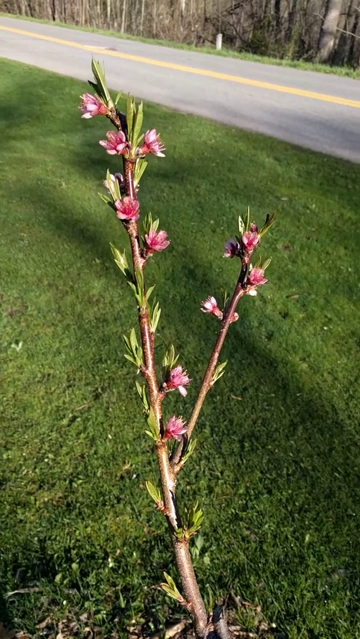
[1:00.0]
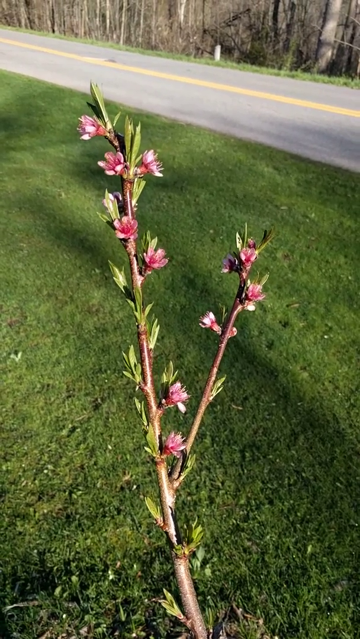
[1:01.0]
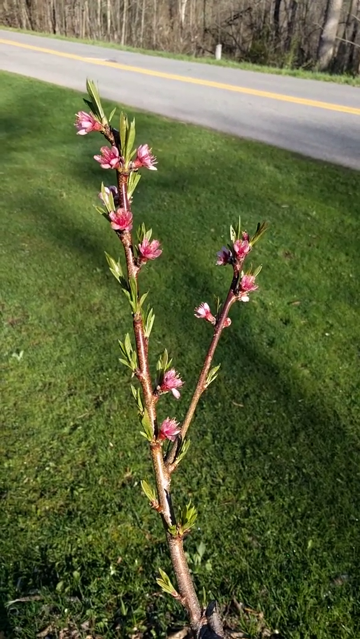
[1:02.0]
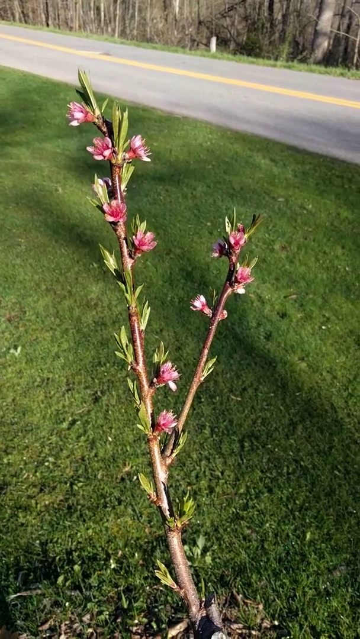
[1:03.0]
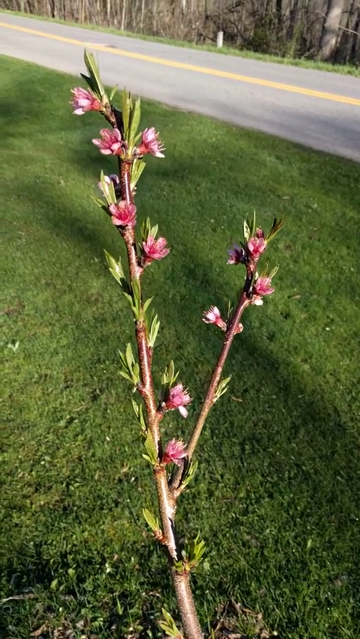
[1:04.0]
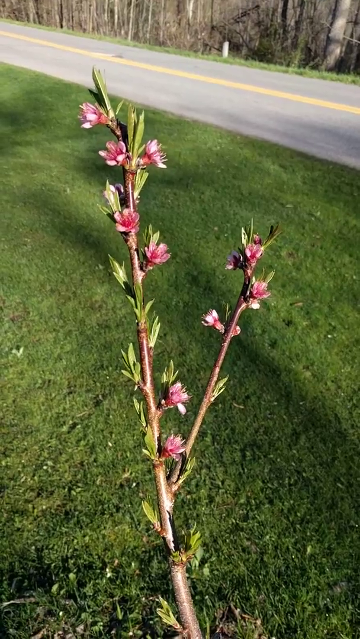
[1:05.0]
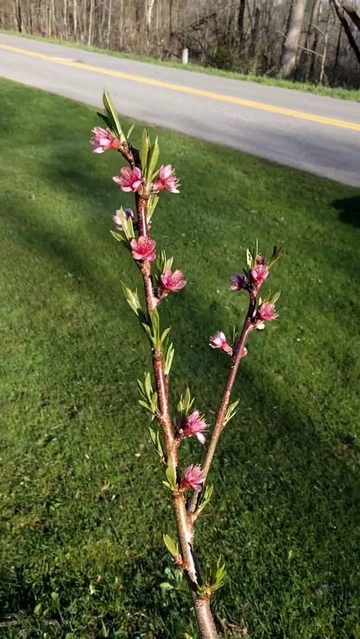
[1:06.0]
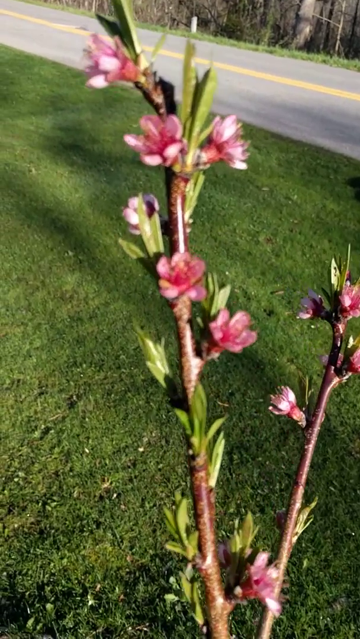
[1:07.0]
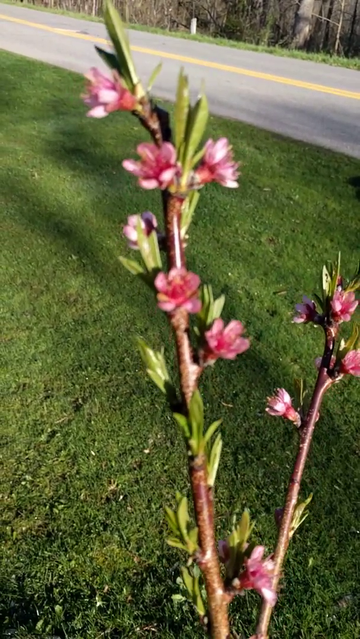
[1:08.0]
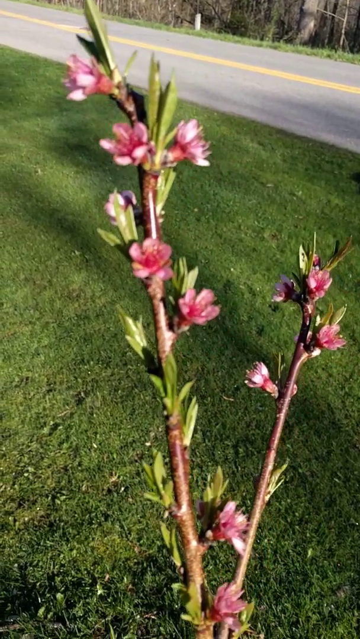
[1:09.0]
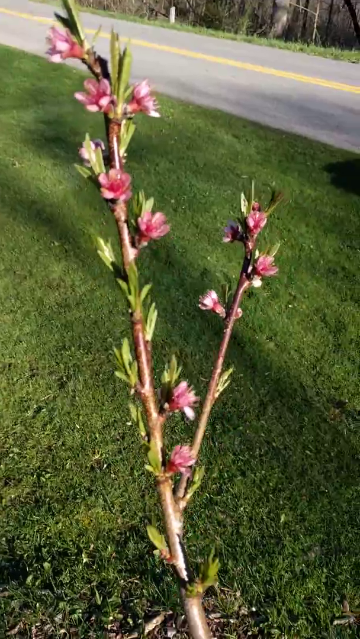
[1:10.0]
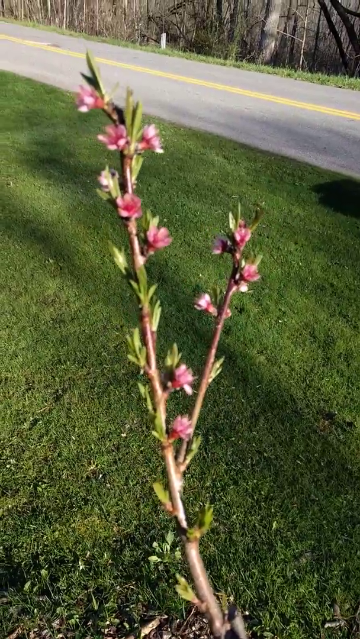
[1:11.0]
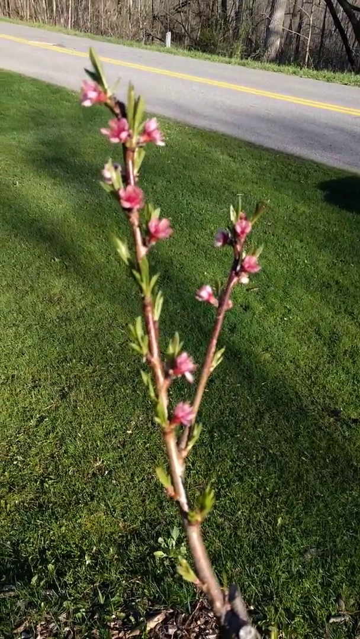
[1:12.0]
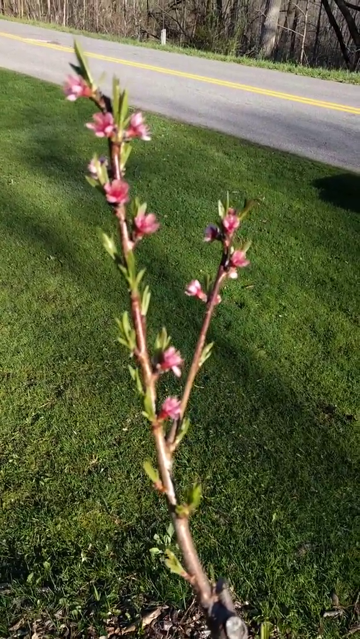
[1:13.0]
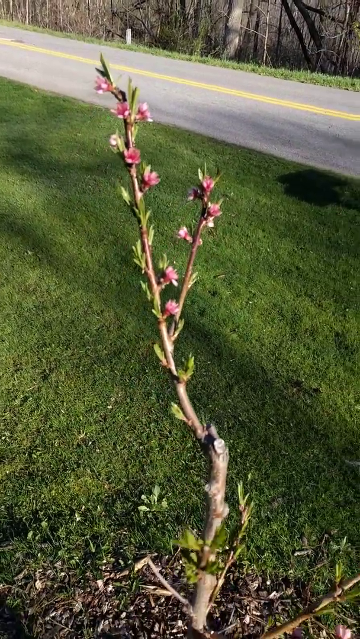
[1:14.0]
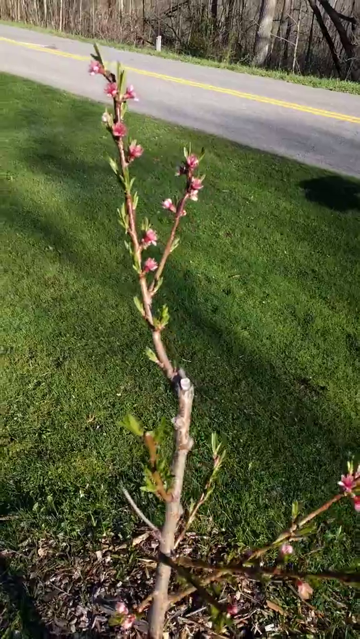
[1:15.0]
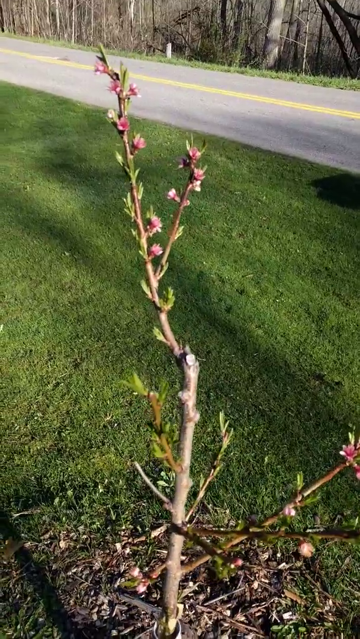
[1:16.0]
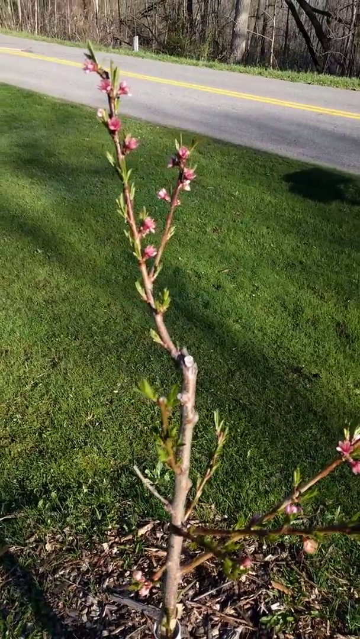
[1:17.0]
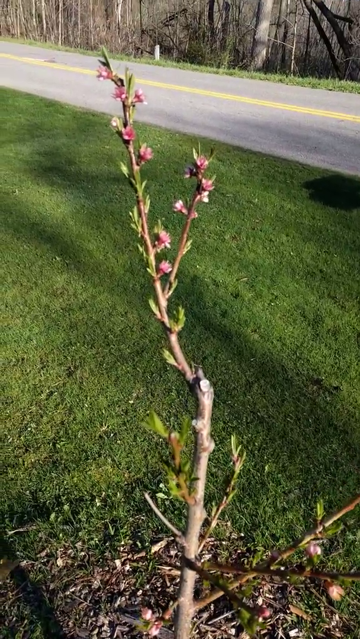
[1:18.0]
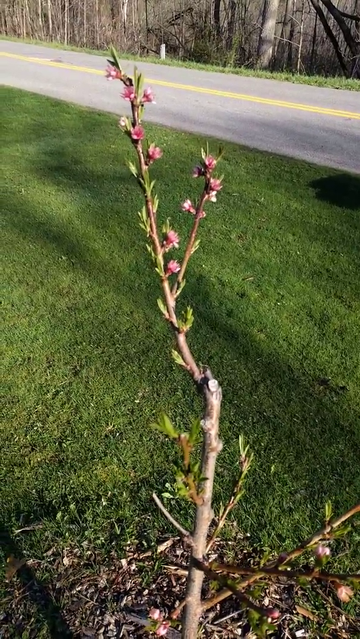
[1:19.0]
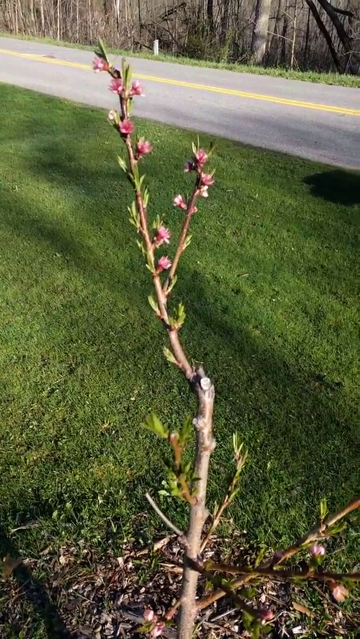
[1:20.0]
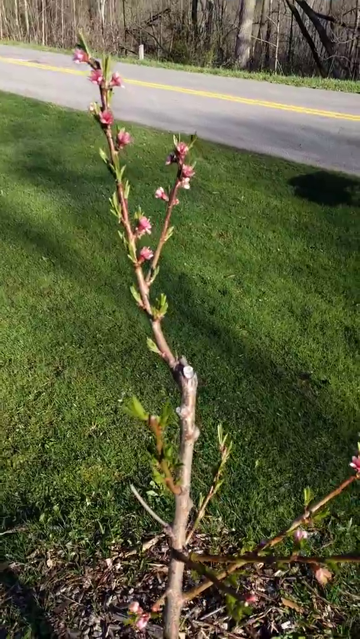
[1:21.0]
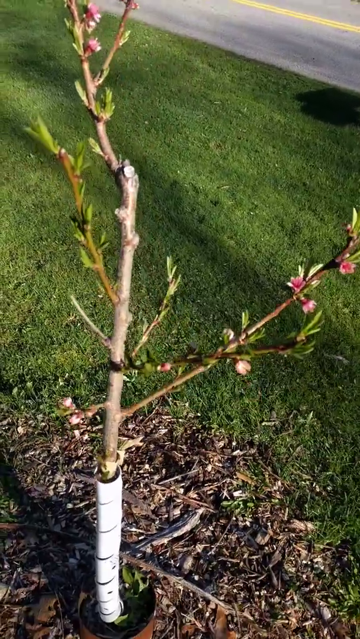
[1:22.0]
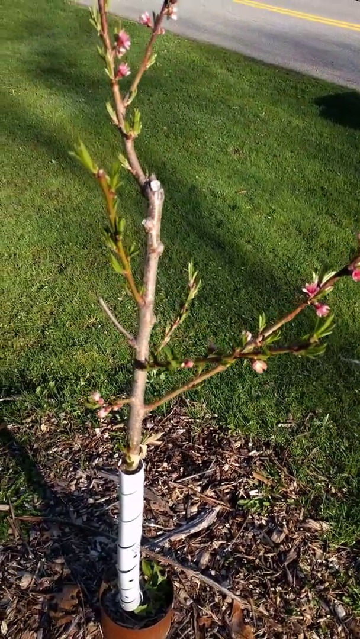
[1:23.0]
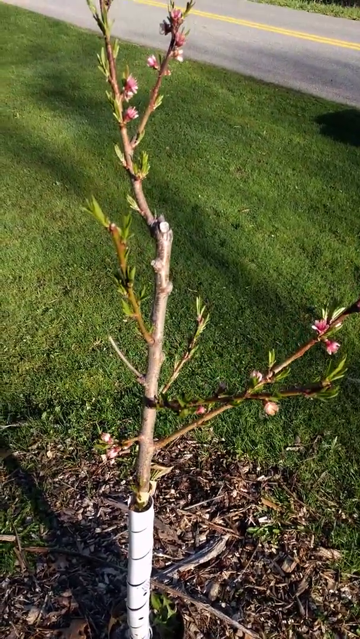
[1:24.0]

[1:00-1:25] Small pink flowers grow on branches with green leaves. The person zooms in on the flowers. Cut grass covers the ground behind the tree, and there is a two-lane road with a yellow strip in the middle. Beyond it is a forest with big trees and some smaller trees near them. The video is very low resolution and appears to be recorded on an old mobile phone.